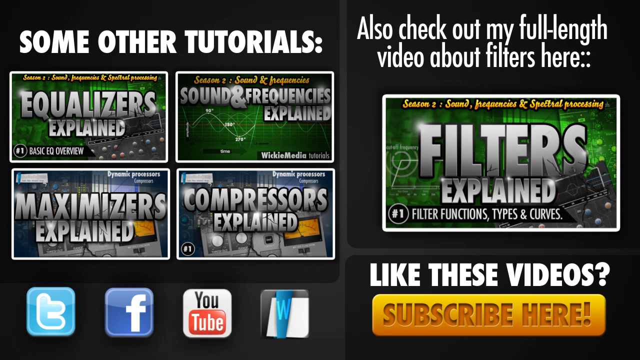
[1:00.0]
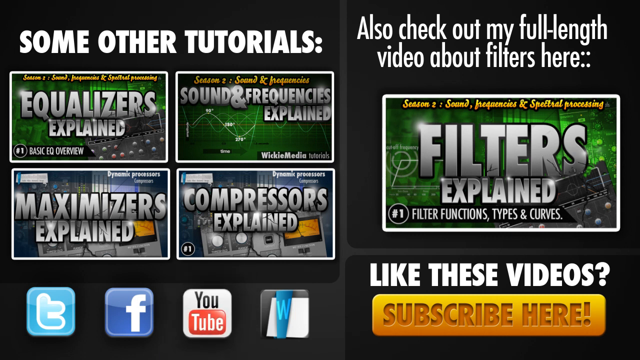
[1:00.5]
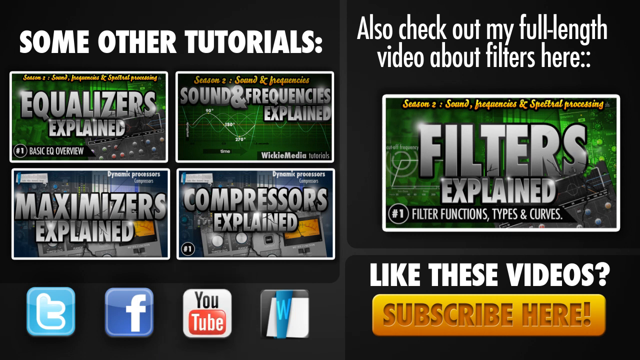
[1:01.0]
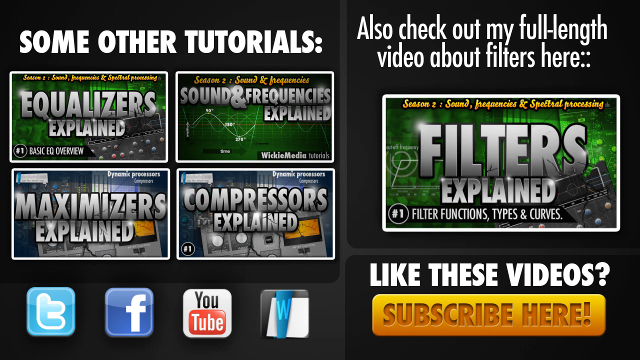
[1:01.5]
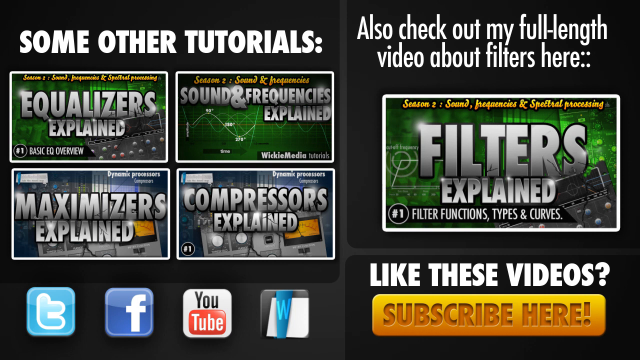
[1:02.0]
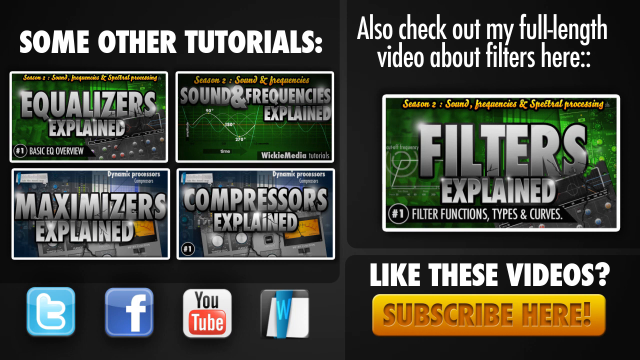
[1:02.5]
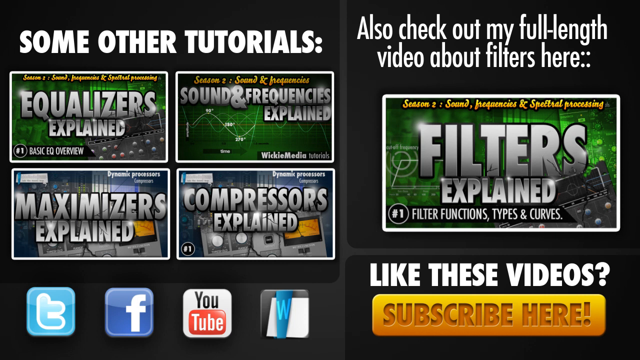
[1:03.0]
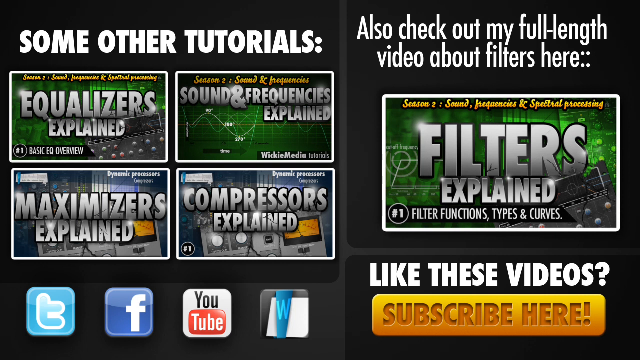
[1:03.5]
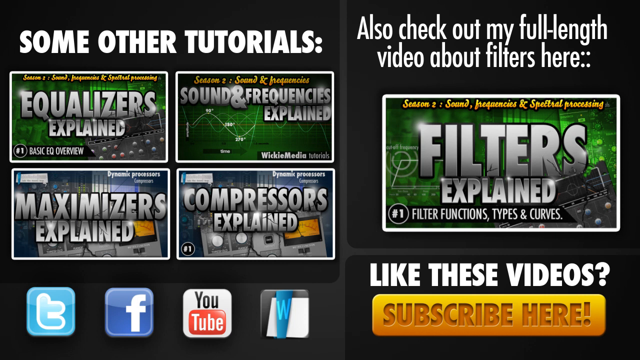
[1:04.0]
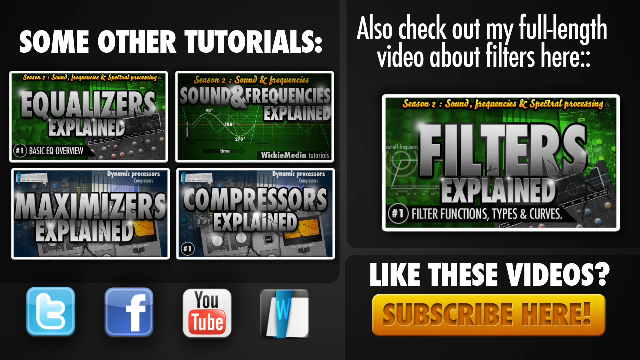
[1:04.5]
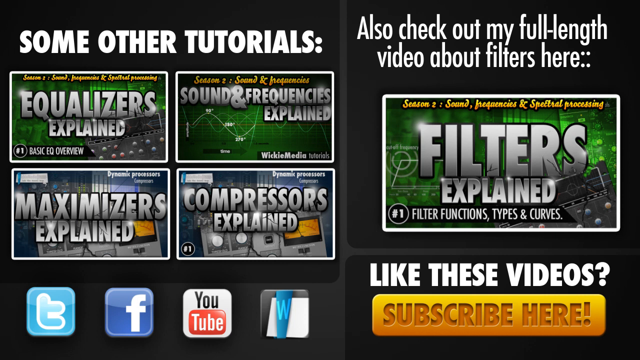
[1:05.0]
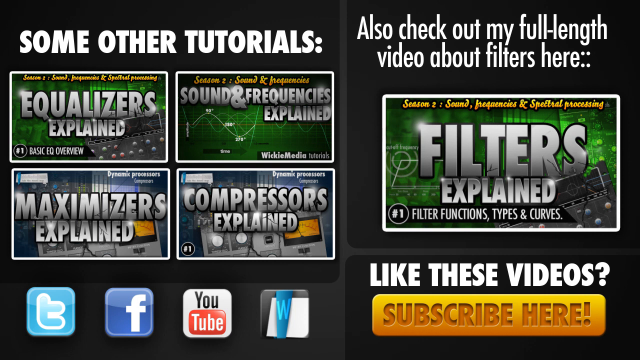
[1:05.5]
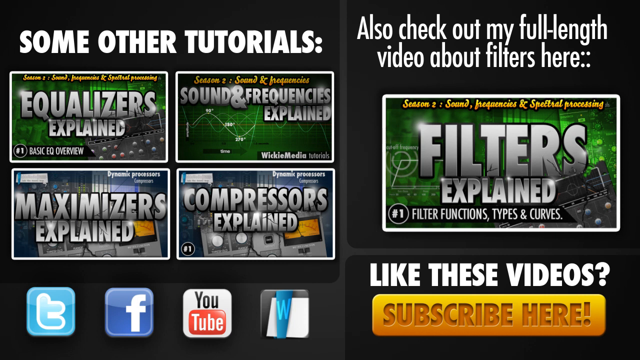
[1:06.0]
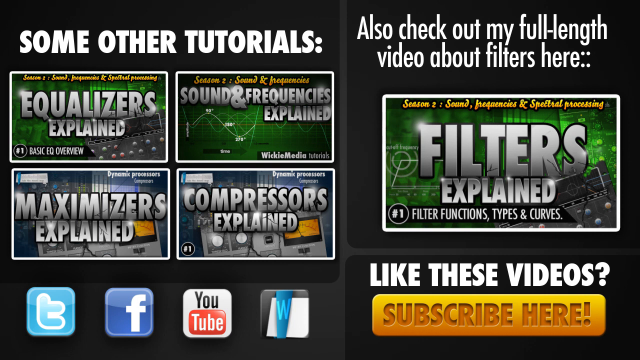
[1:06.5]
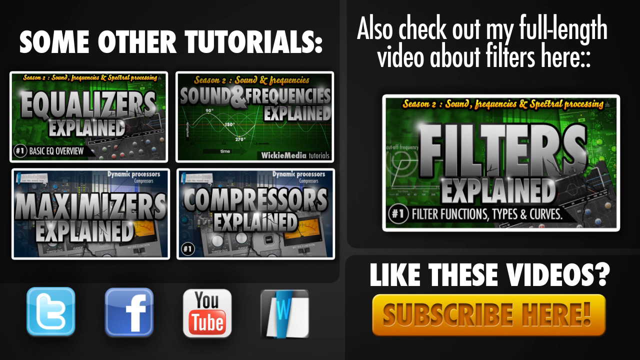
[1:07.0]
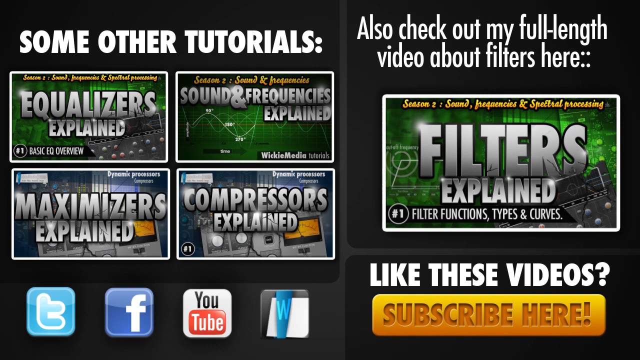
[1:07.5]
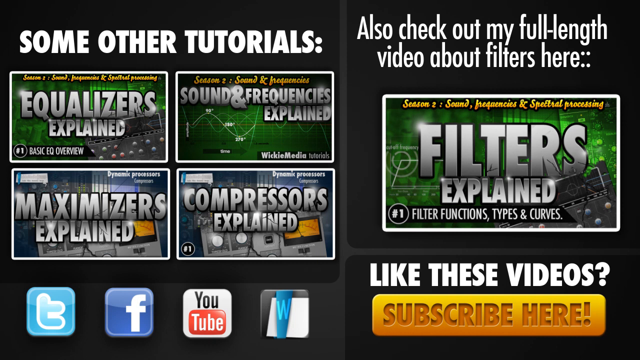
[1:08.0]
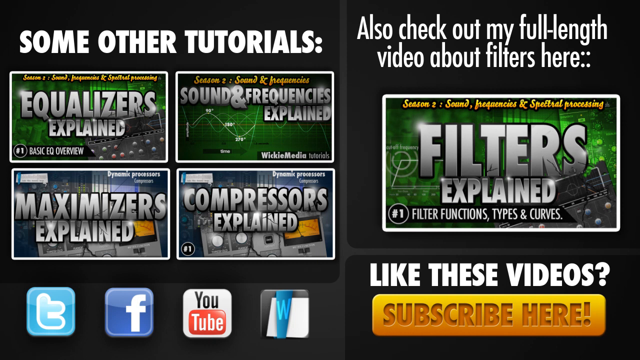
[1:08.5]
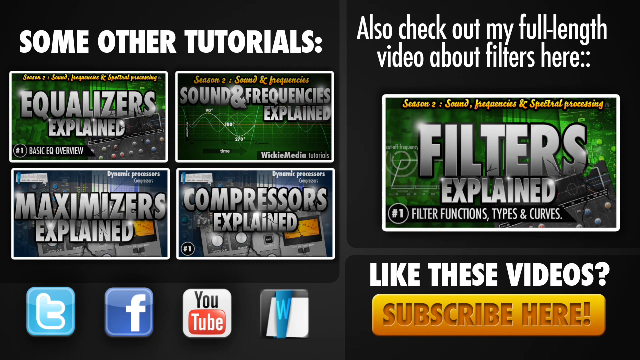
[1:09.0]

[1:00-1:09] The video lingers on the end screen: a black background with "some other tutorials" in bold white at the top left and four rectangles under it, two on top and two on the bottom, as video options to click on. Below them are a Twitter icon, then Facebook, then YouTube, then a blue icon with a W in it, apparently for their website. Across the top is "also check out my full length videos about filters here," with another clickable video about twice the size of the others. Below that in white is "like these videos," and below that a yellow rectangle reads "subscribe here" in red.